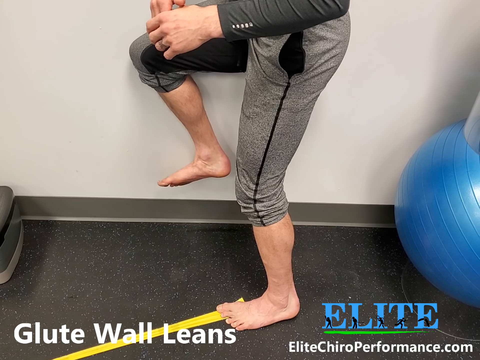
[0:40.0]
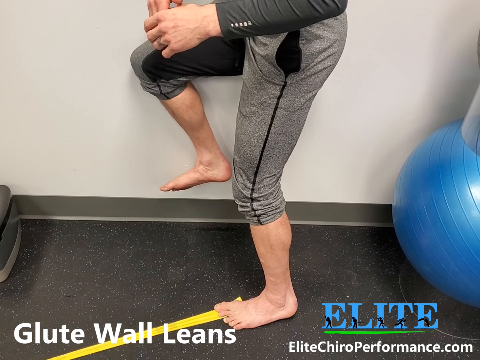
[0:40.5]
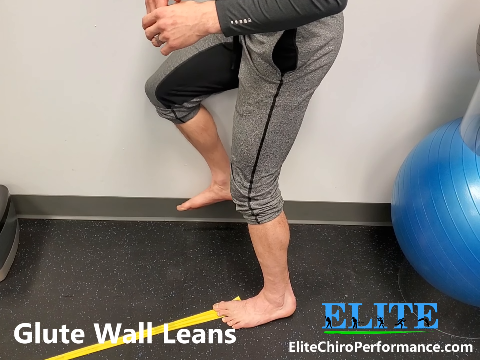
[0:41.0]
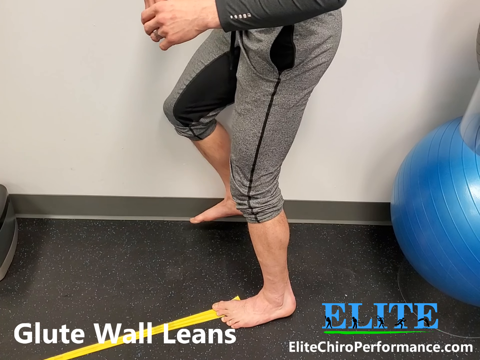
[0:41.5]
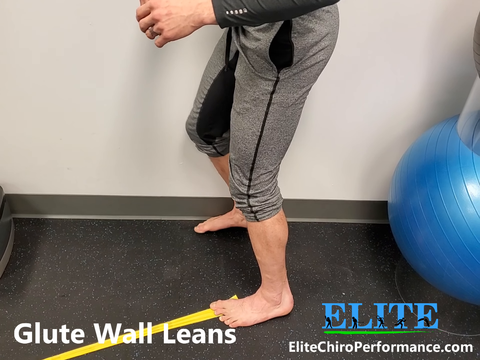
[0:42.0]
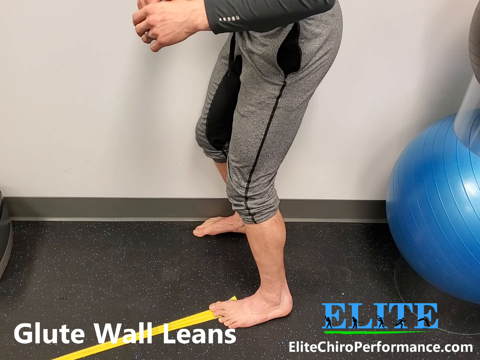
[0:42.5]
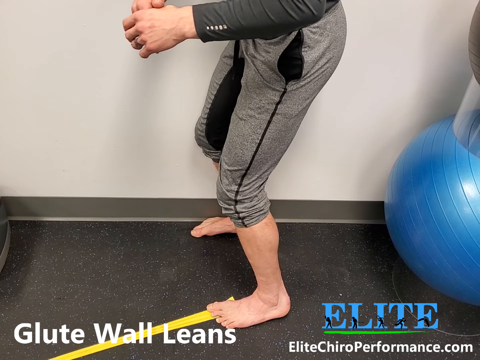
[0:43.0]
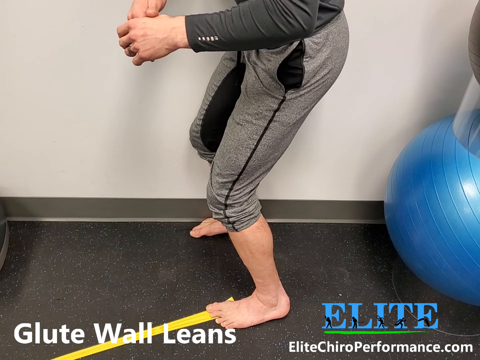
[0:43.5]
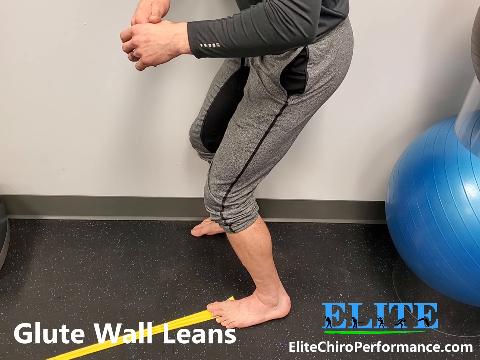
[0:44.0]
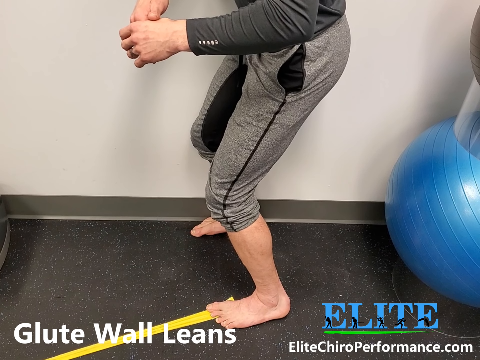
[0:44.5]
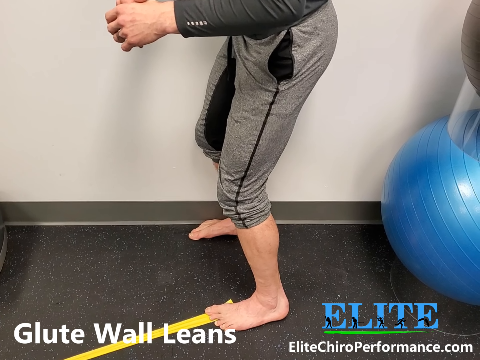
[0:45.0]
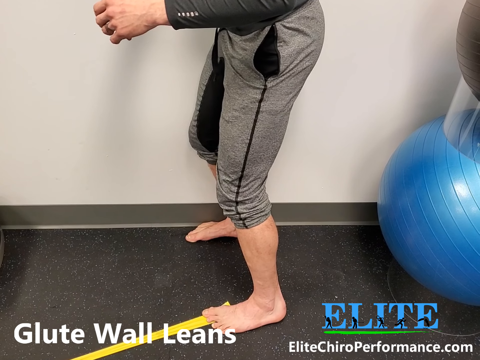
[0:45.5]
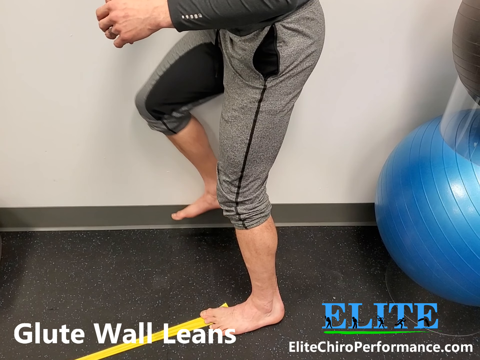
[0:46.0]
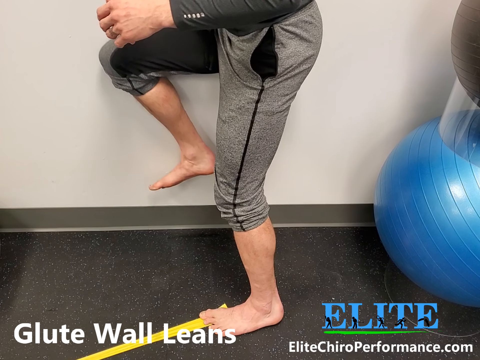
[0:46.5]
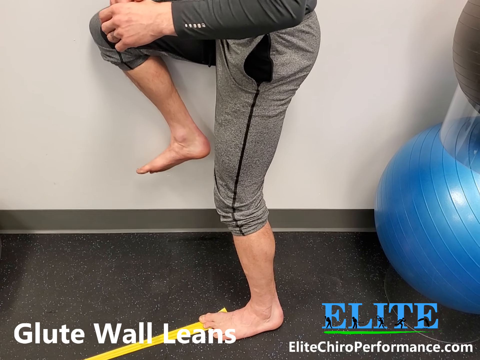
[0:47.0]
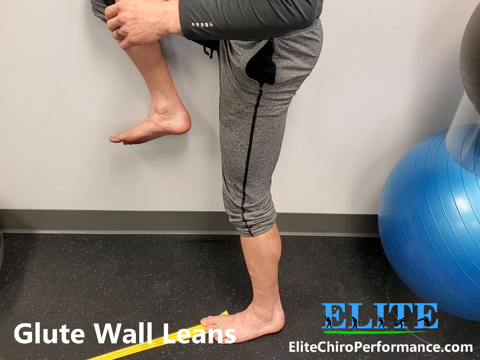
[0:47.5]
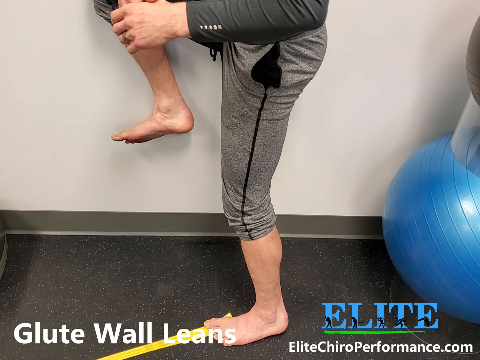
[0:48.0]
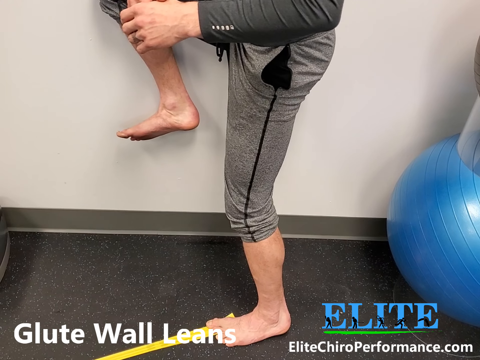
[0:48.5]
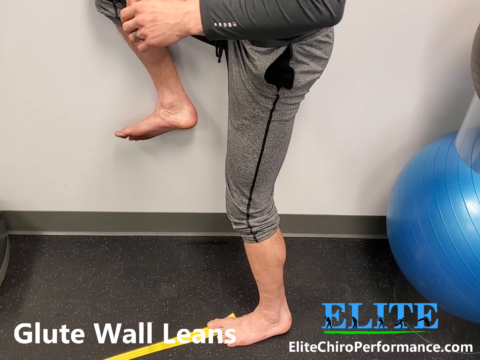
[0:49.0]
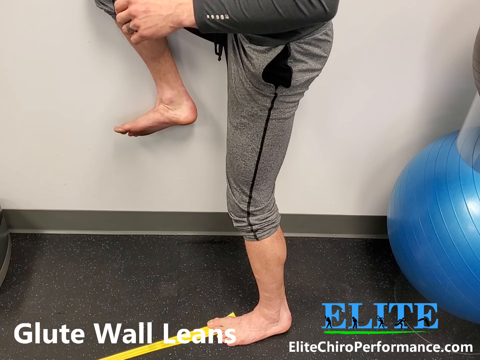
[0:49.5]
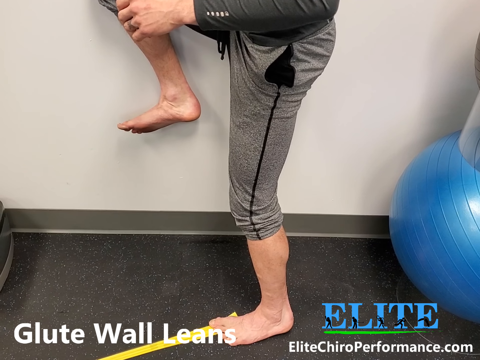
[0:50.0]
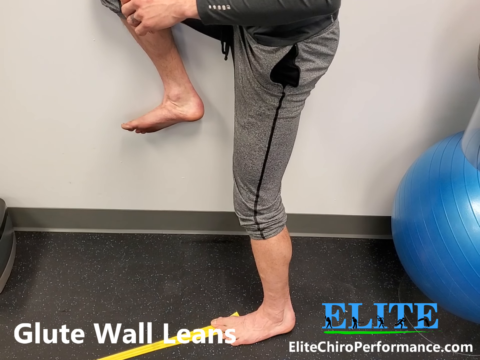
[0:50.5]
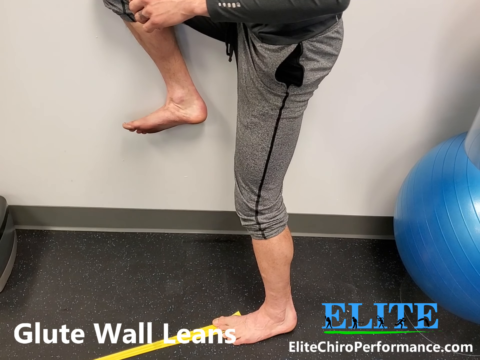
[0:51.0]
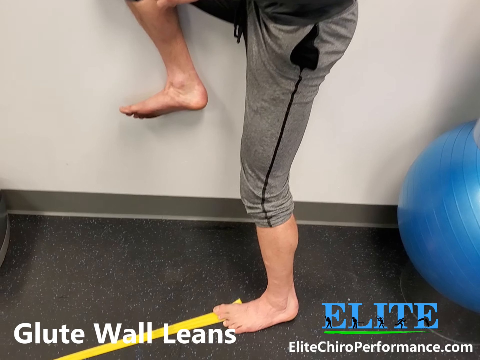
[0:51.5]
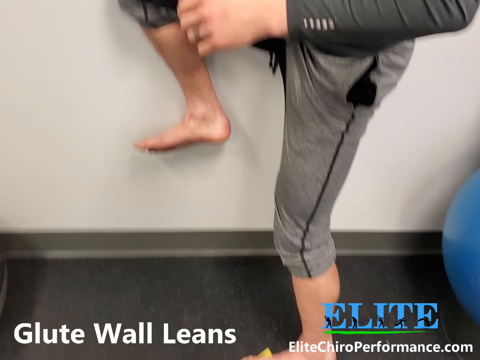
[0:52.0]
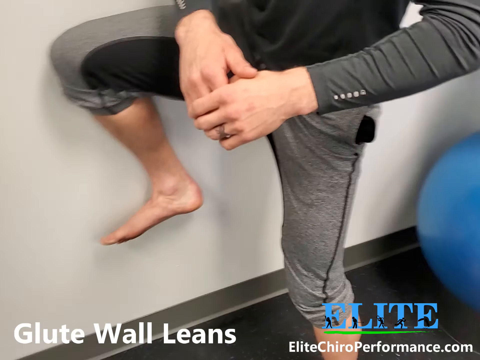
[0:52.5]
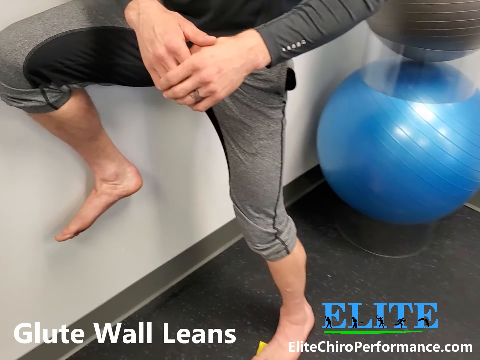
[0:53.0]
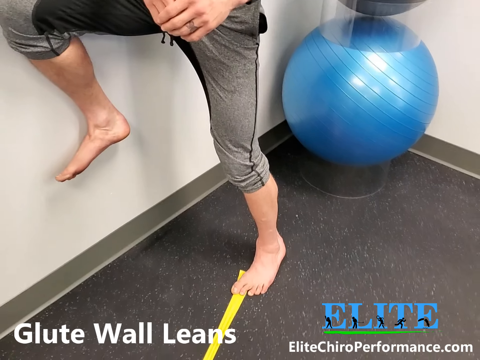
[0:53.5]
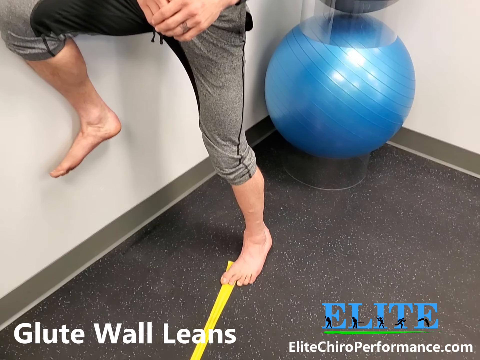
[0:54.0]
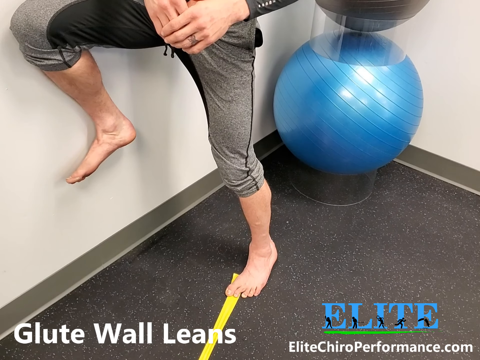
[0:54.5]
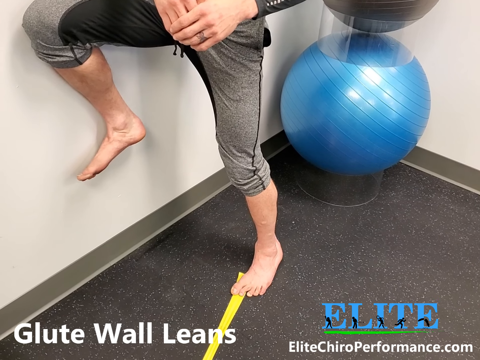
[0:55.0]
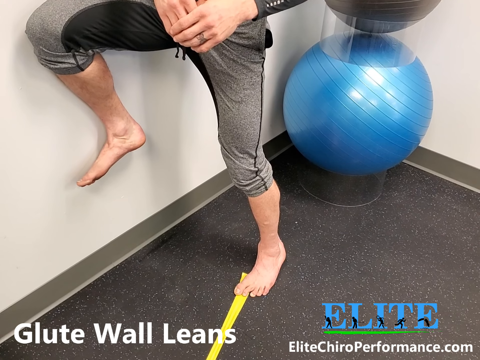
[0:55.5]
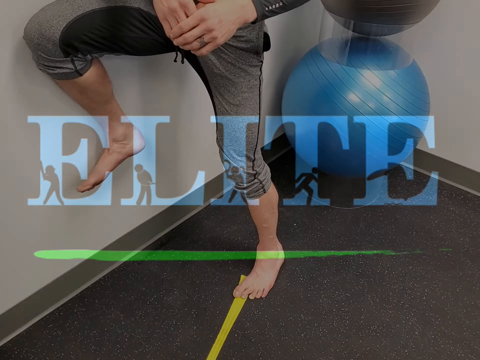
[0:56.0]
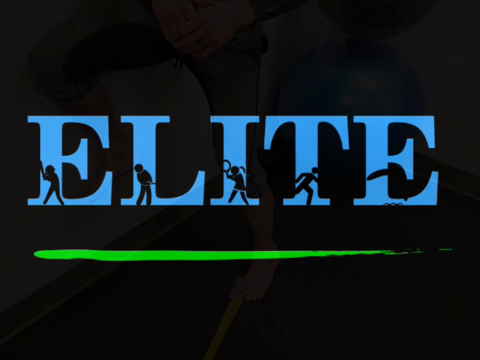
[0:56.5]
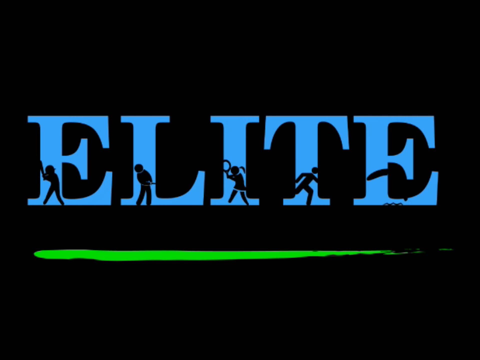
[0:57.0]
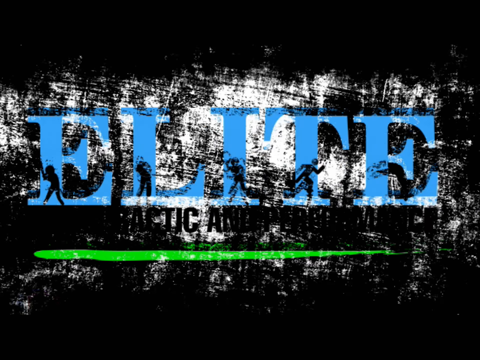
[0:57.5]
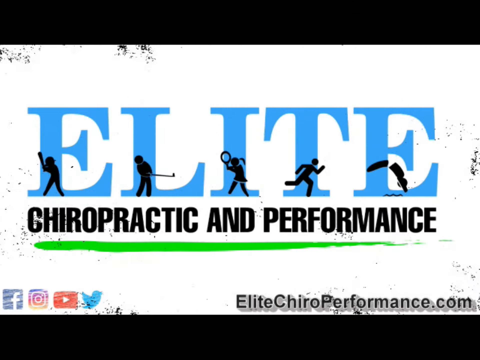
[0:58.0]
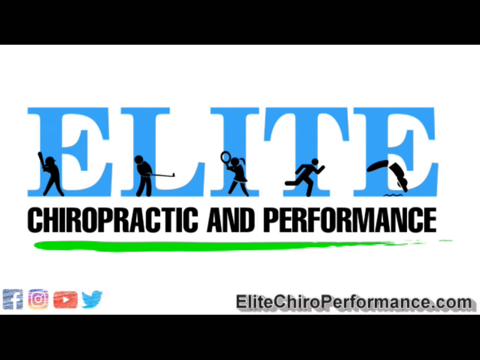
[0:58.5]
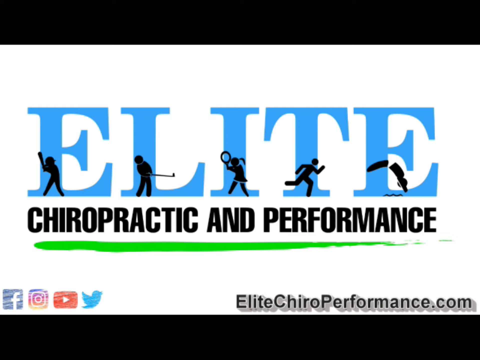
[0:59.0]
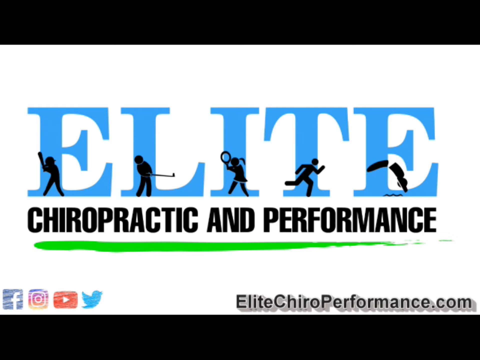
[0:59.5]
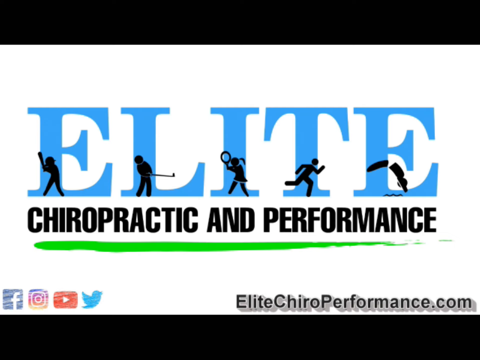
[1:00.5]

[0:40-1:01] Text at the bottom left names the exercise, "glute wall leans", and on the right "elite" appears in blue with "elitechiroperformance.com" below it. The person in sort of gray sweatpants has their right leg sort of towards the wall and is lowering it towards the black ground, with a blue exercise ball behind them. The person kind of starts to move into a little bit of a squat position, then moves their right leg up again towards the wall, with the knee raised past the video frame, apparently higher than about waist level. The camera starts to kind of turn around to show more of the person's front, where their hands are kind of clasped together. The video then transitions to a screen reading "elite" with a green kind of mark underneath, and inside each letter is a little silhouette of a person doing some sort of exercise. It then transitions to a white screen with the same imagery plus "chiropractic performance" underneath, social media icons in the bottom left, and "elite chiroperformance.com" in the bottom right.